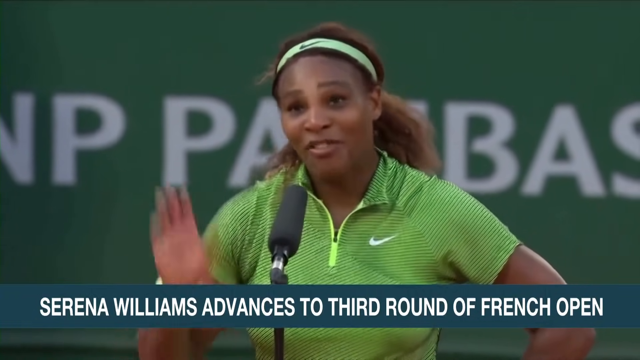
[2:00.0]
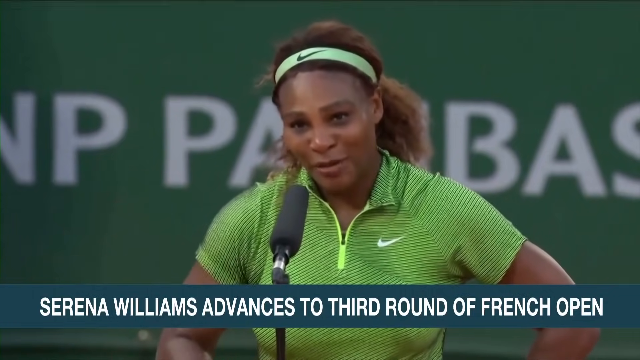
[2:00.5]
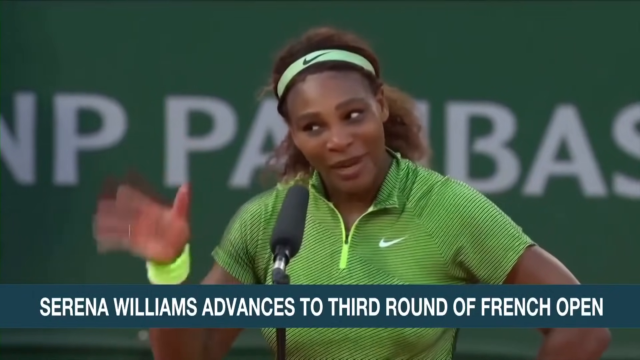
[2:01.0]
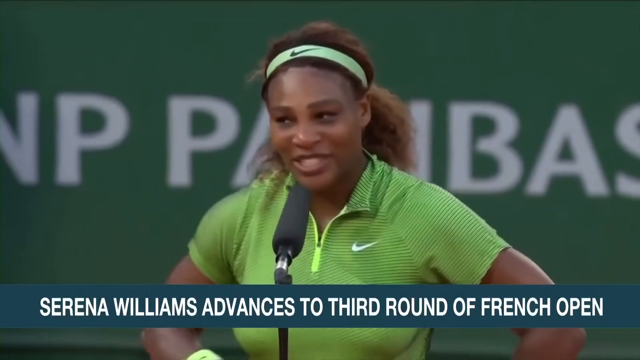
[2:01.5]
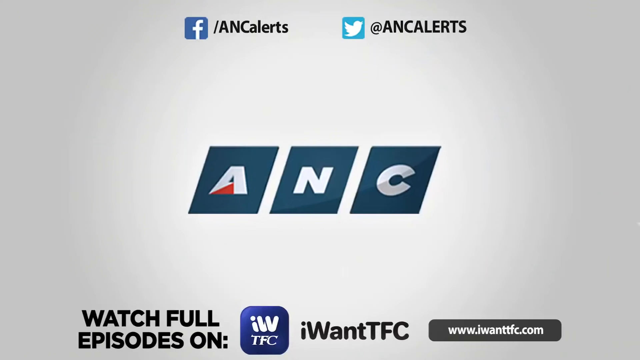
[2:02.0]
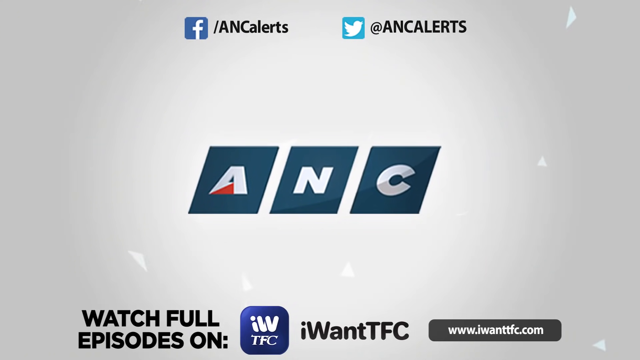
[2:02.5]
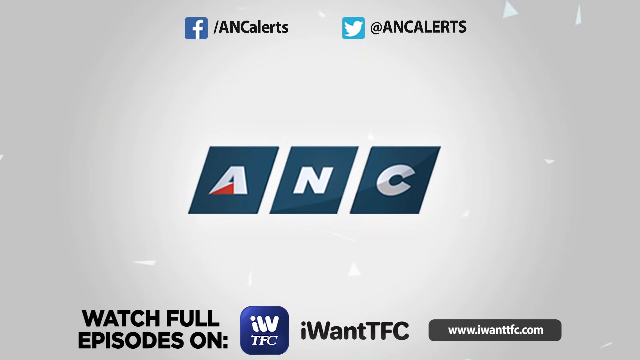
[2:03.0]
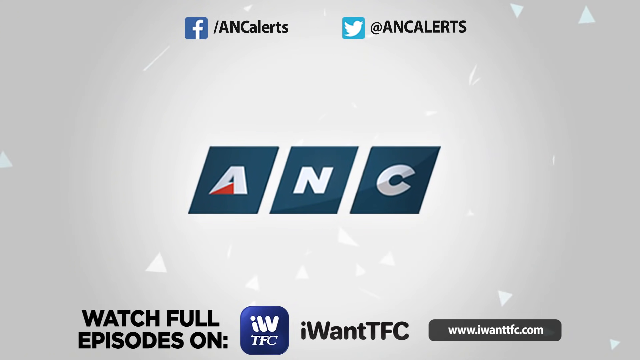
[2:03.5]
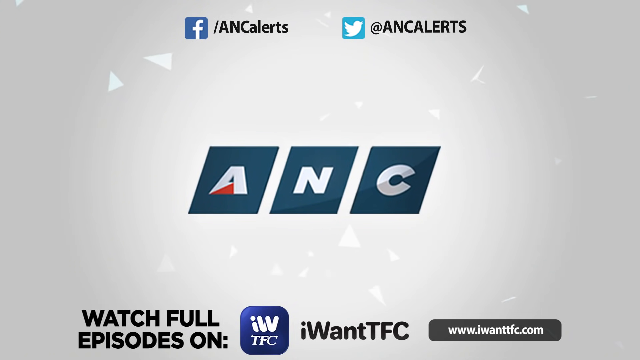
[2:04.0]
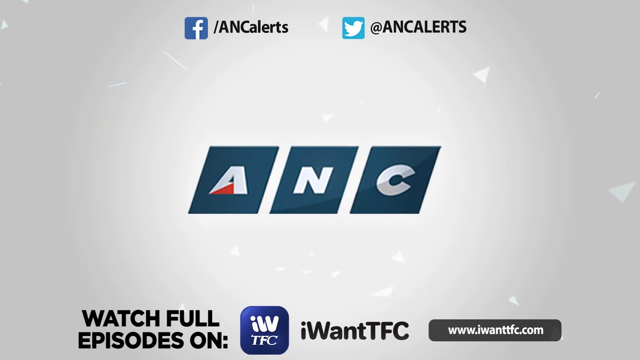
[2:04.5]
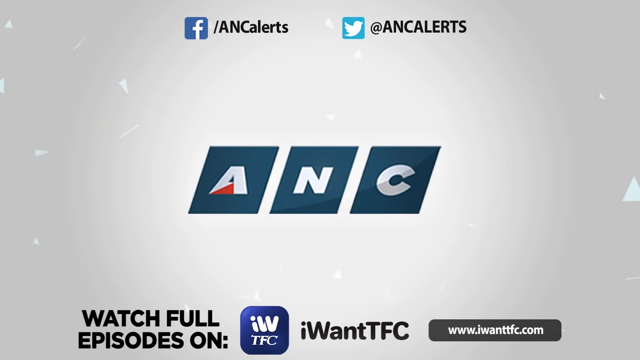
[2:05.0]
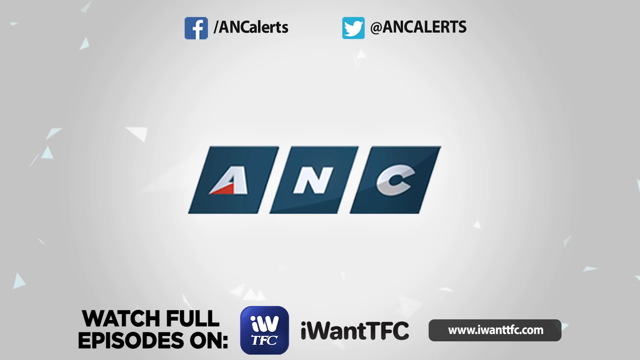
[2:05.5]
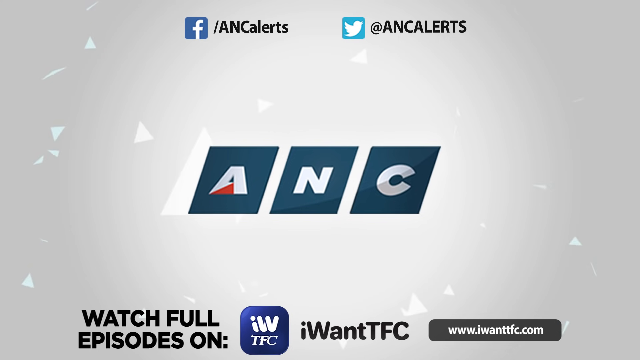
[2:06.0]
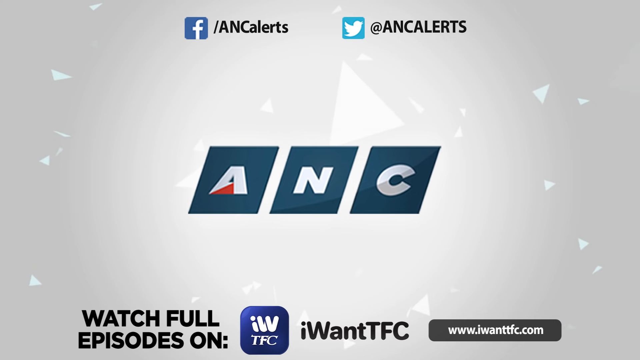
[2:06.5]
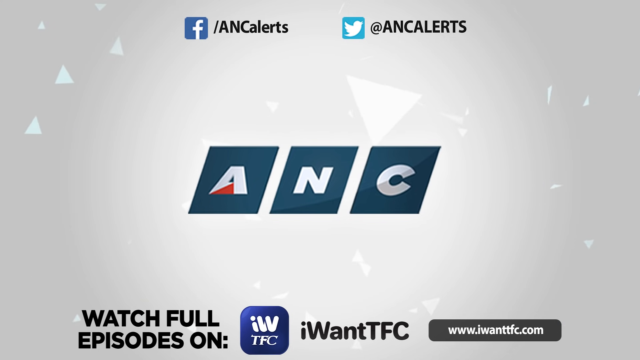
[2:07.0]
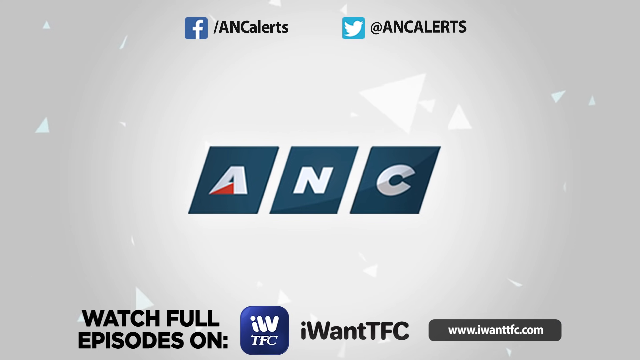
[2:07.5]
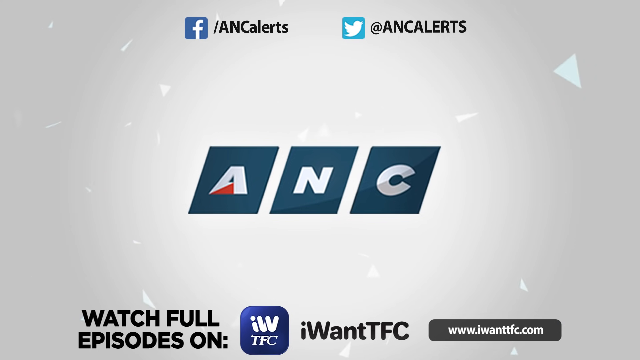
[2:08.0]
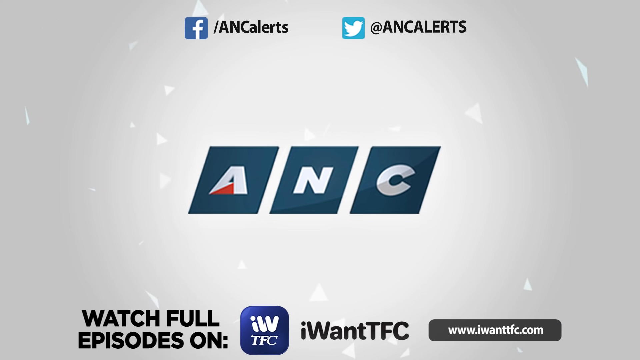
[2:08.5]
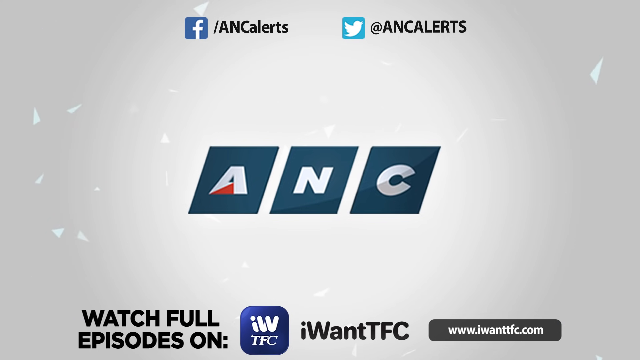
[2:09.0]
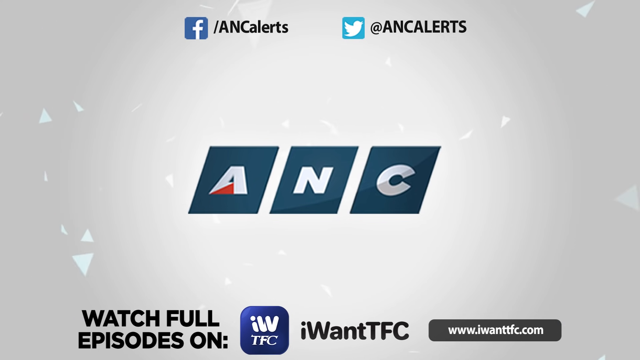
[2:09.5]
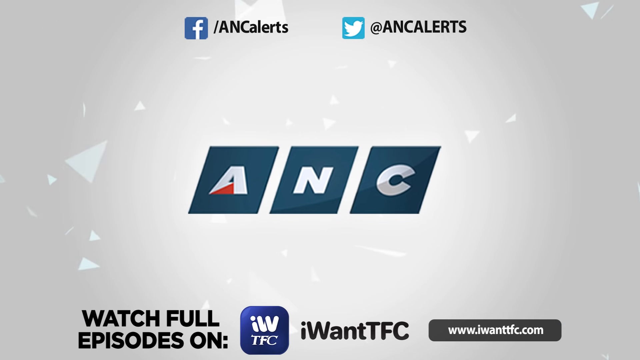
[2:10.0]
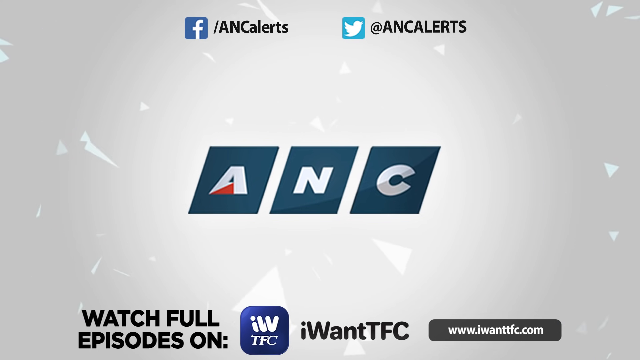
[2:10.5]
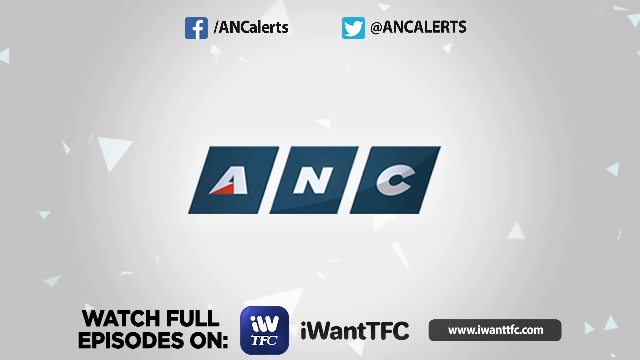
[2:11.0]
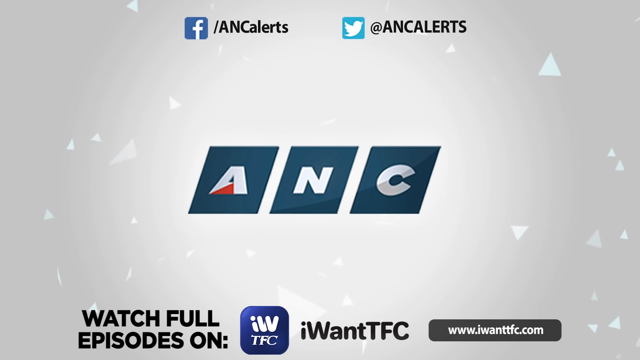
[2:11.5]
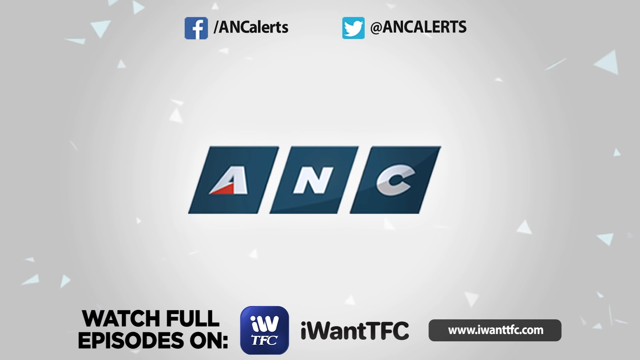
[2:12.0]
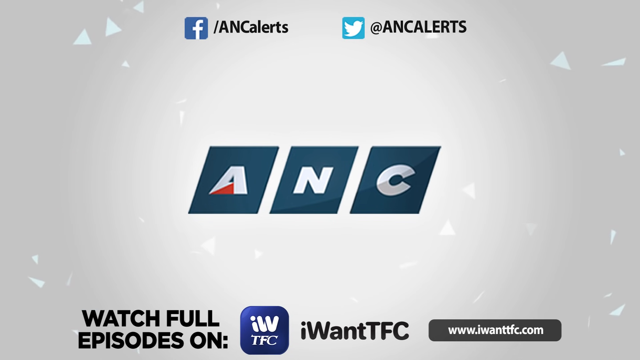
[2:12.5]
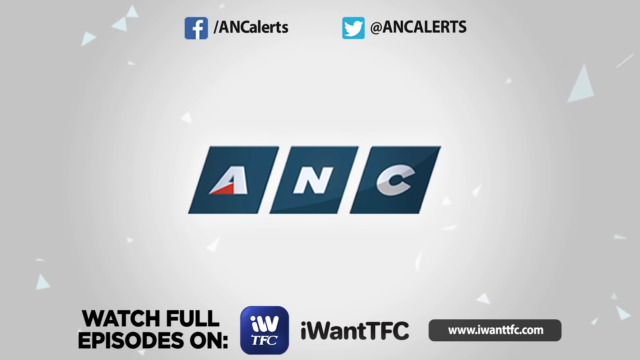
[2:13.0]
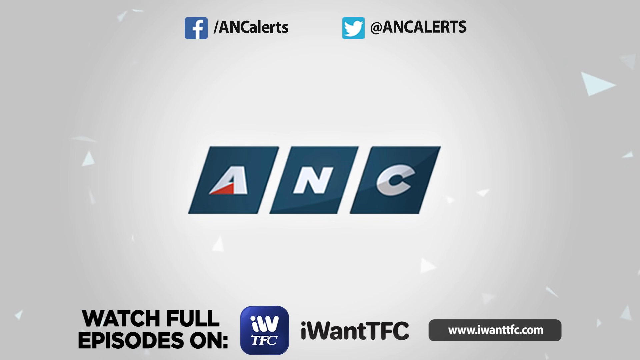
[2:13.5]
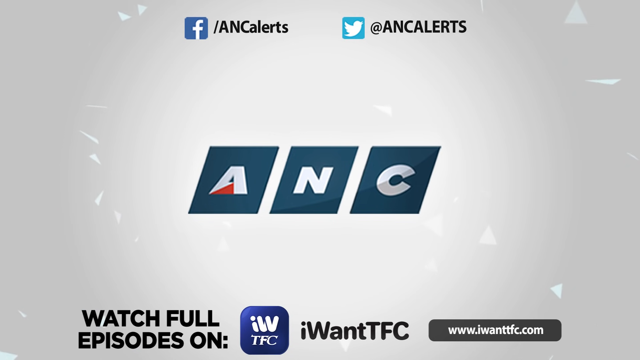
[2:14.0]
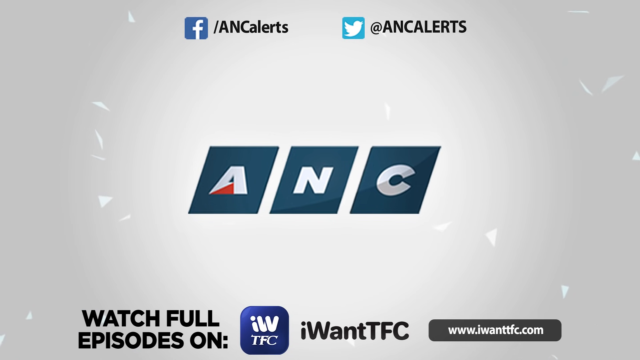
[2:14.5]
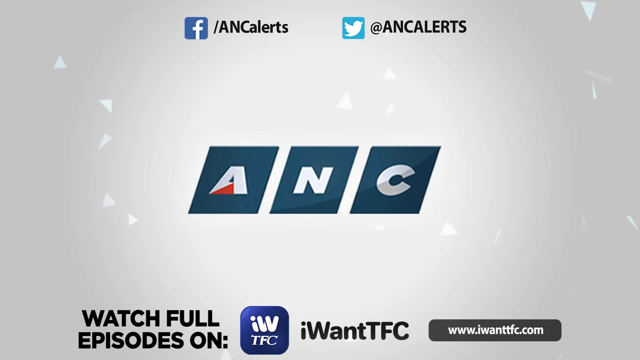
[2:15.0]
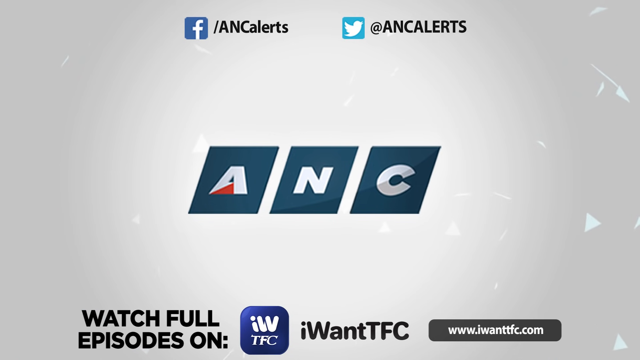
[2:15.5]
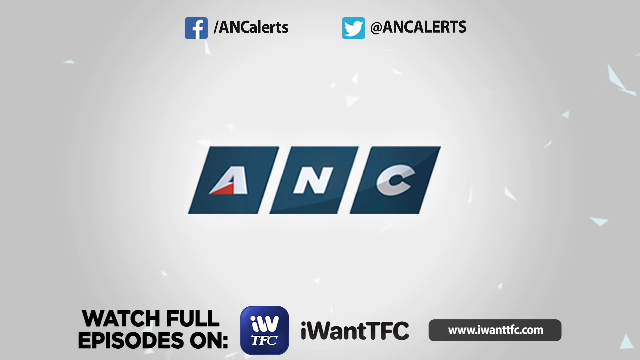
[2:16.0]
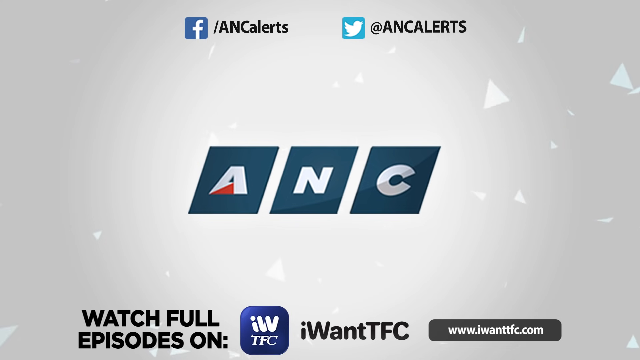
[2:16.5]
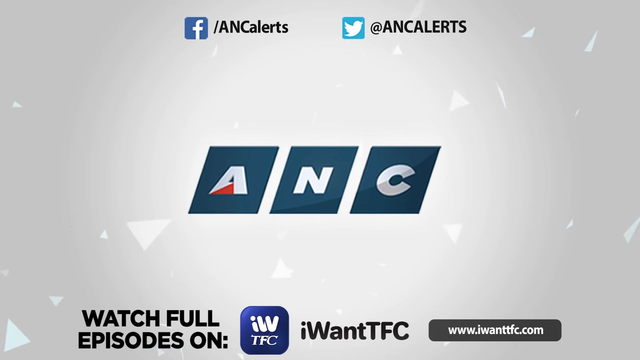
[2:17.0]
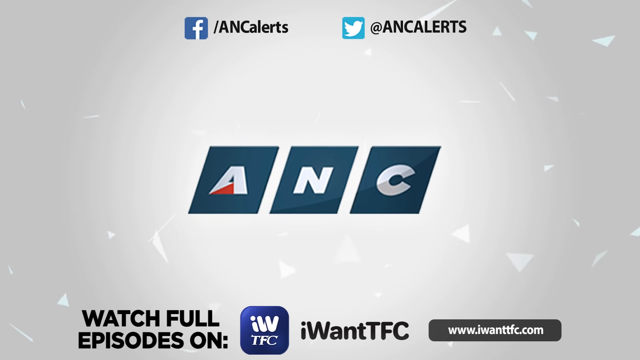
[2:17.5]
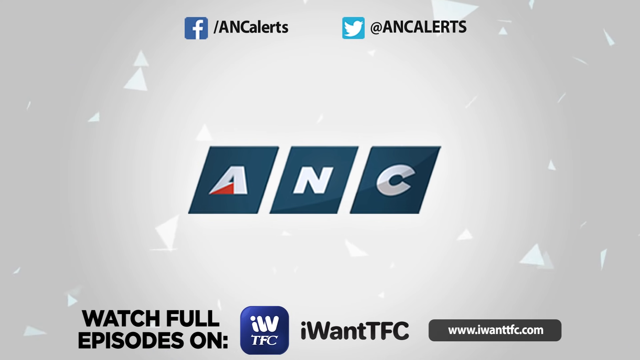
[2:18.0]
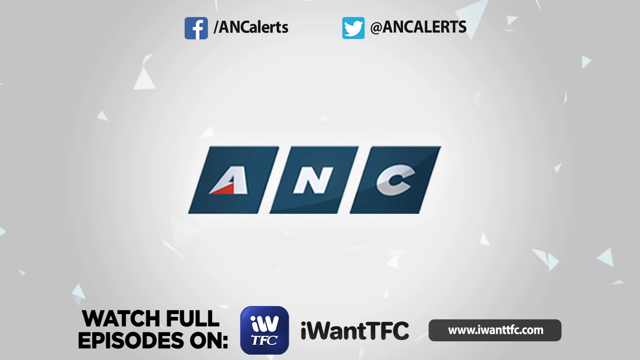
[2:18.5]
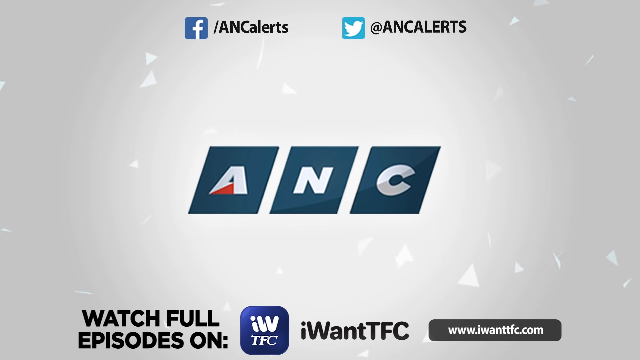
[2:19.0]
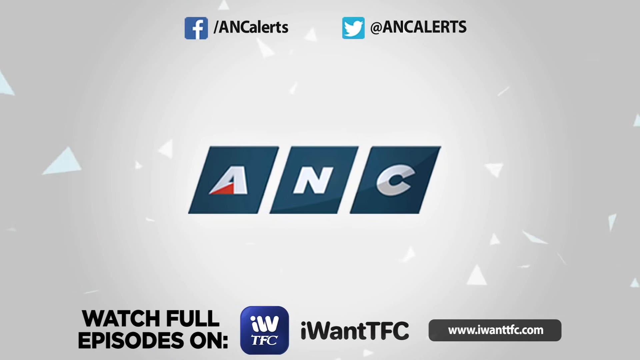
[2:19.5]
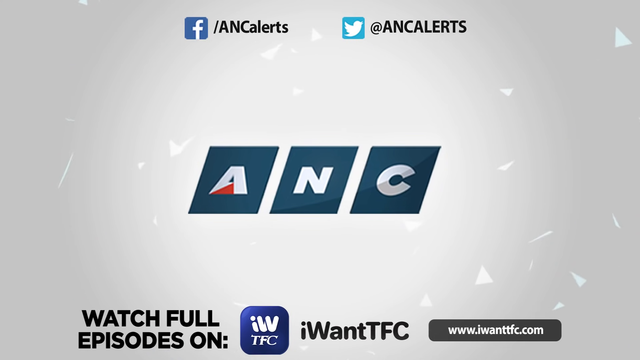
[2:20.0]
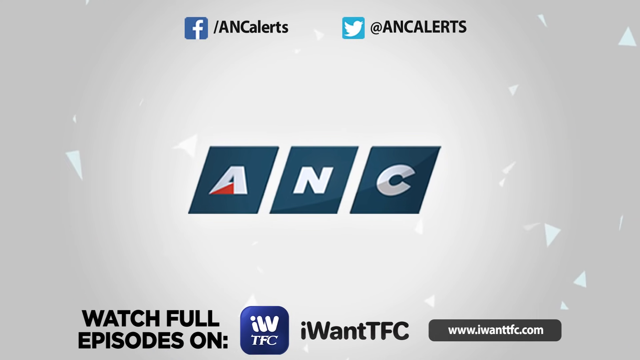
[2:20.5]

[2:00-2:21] Serena Williams stands at a microphone on the court with her hands on her hips, looking out into the crowd. She wears a short-sleeved green shirt with a white Nike Swoosh and a half zip down the front. The background is dark green and reads "BNP Paribas" in white letters. Early on, she raises her right hand and is very animated as she talks and smiles. The video then switches to a white screen with the letters "ANC" written in white over blue blocks in the middle. Links to the Facebook page and the Twitter page appear at the top, and at the bottom, text reads "watch full episodes on TFC. I want TFC." In the background, illuminated triangles appear to float from left to right, spanning the screen.